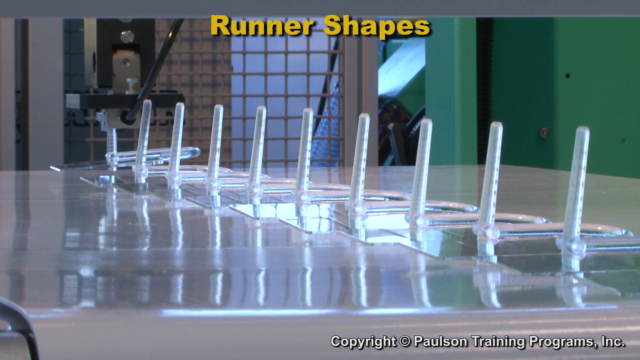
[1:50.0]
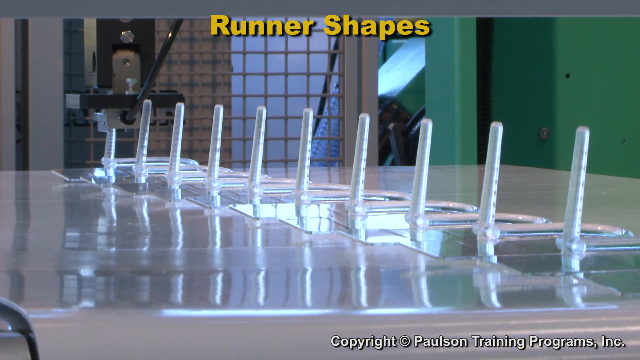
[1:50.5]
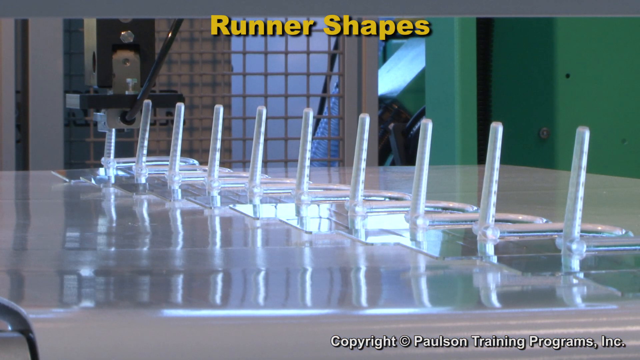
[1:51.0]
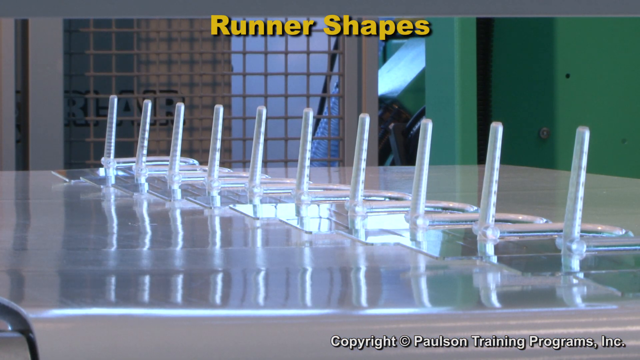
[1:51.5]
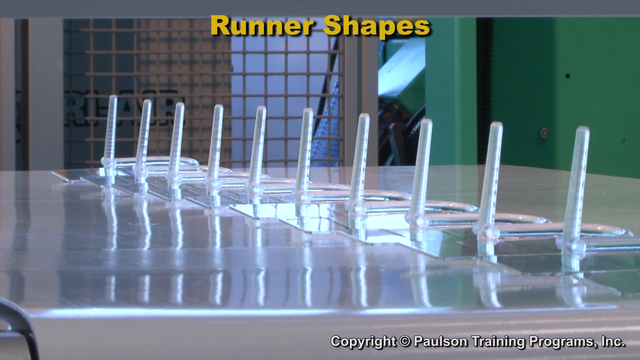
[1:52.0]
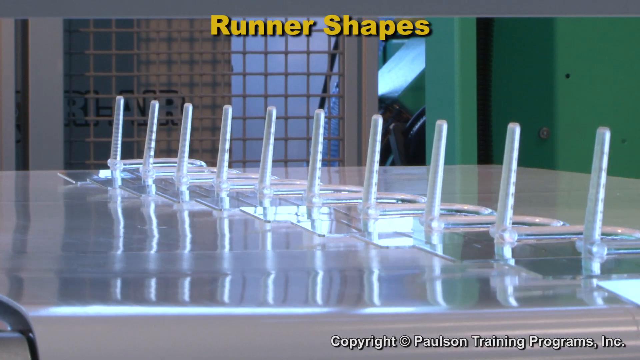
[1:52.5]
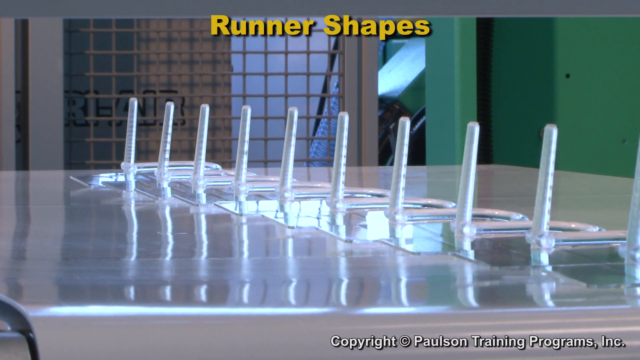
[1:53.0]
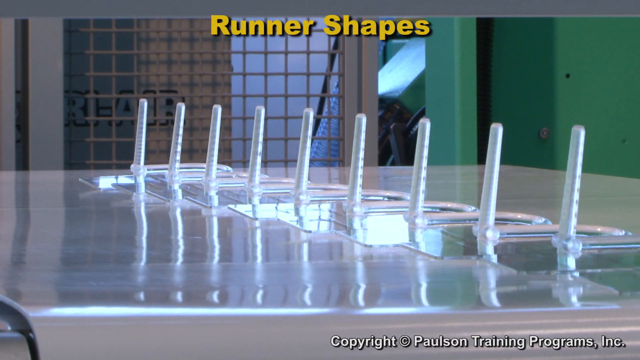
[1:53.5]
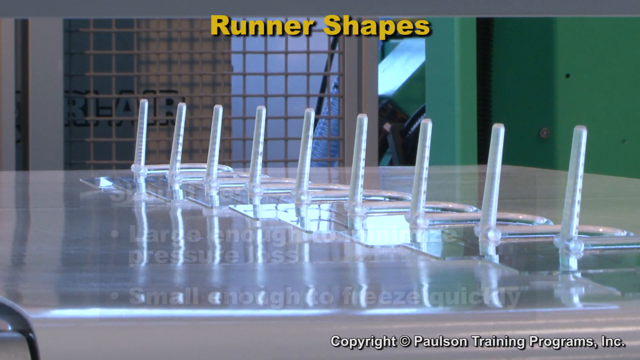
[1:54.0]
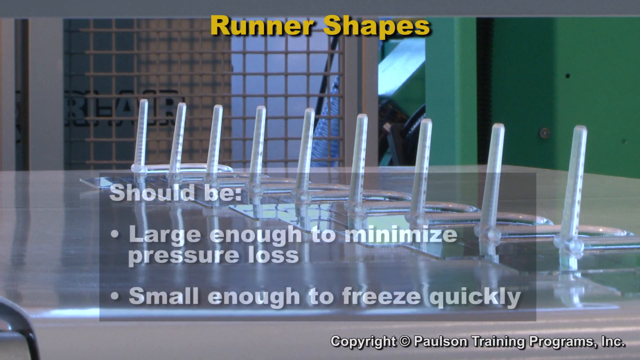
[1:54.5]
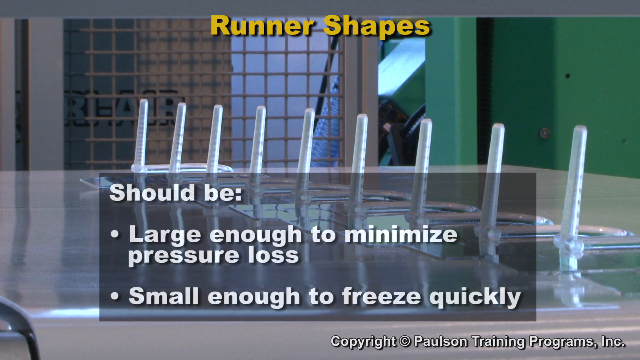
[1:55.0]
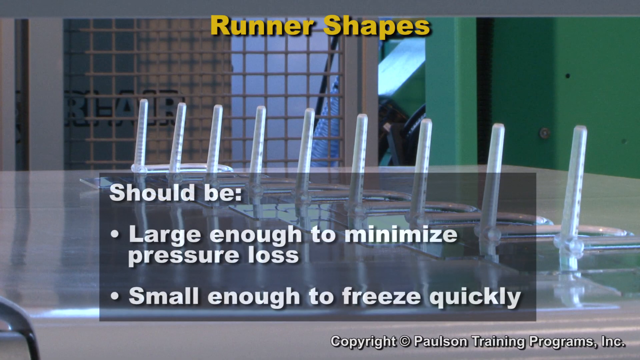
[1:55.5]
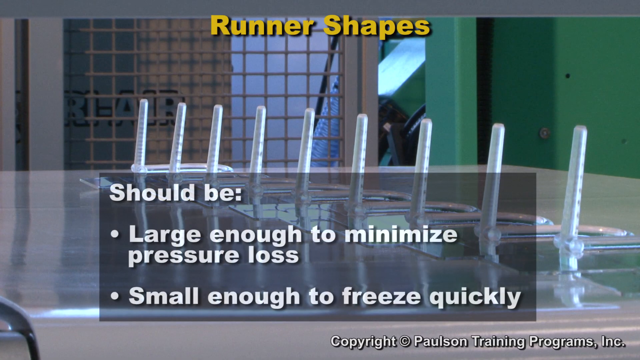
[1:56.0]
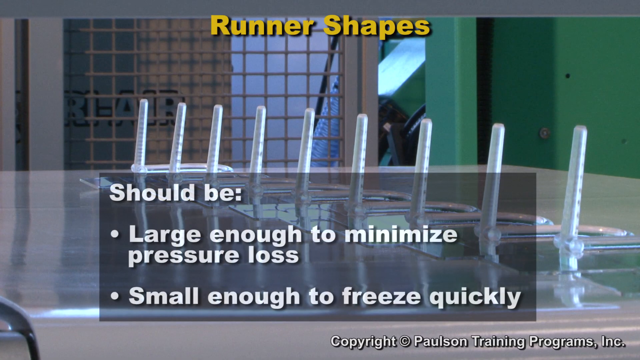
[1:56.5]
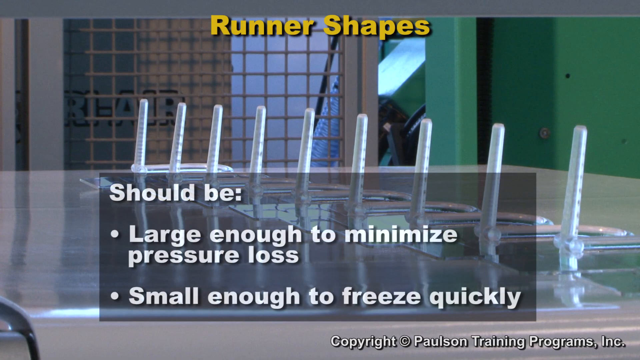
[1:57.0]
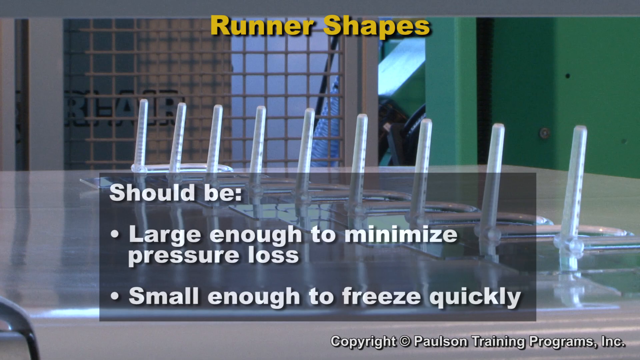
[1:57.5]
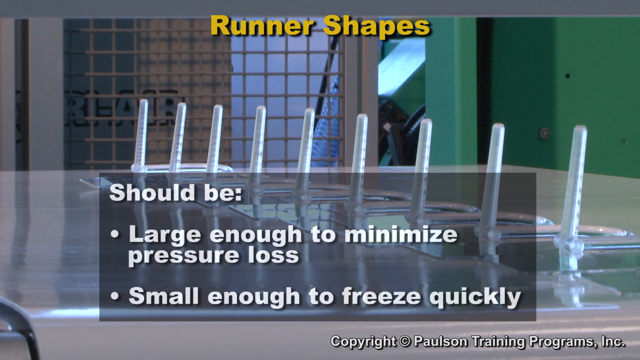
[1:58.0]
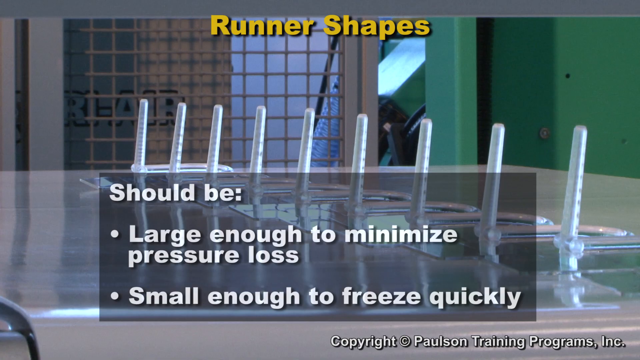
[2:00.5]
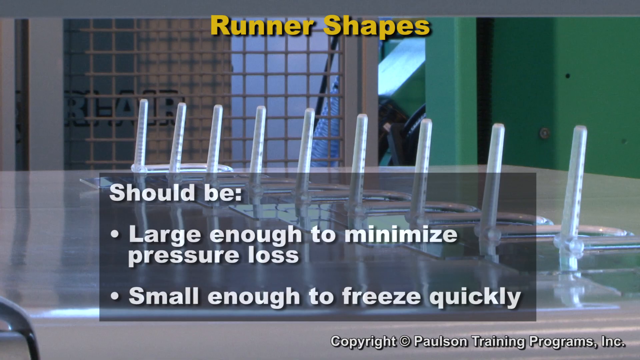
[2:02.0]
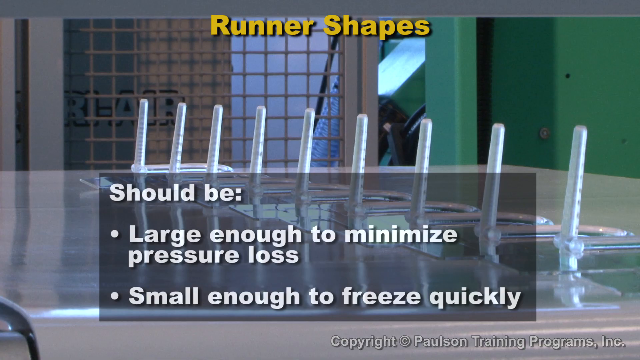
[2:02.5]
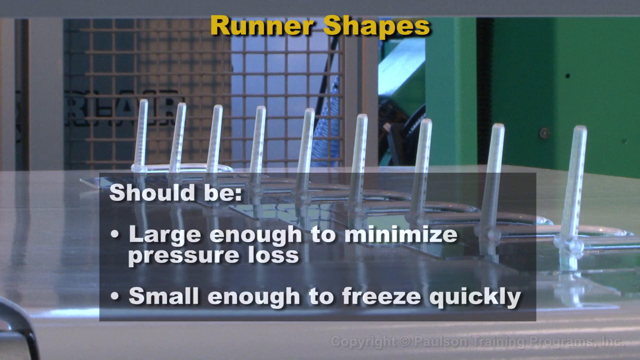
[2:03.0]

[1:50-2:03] A rendering about runner shapes shows the words "runner shapes" in yellow block text with a slight drop shadow. Below it is what appears to be a flat, somewhat shiny surface with what appear to be 10 runner tubes protruding from it vertically, almost perpendicular to the surface. Before the surface moves forward, a machine appears that is predominantly black with some metal alloy components mounted within, and a black tube comes down from it; it looks like two perpendicular rectangles, the larger one oriented vertically and a smaller perpendicular one forming some type of mount at the lower portion. The device comes down and attaches to one of the runners pointing upward from the surface, then appears to inject some type of fluid or carry out some process in which the runners move, and it comes up in a very swift motion, off the top of the frame. The flat surface moves forward and a text graphic appears: under the yellow "runner shapes" heading it says "should be:" followed by the bullet points "large enough to minimize pressure loss" and "small enough to freeze quickly". At the end of the video, the words "copyright Paulson training programs" appear.